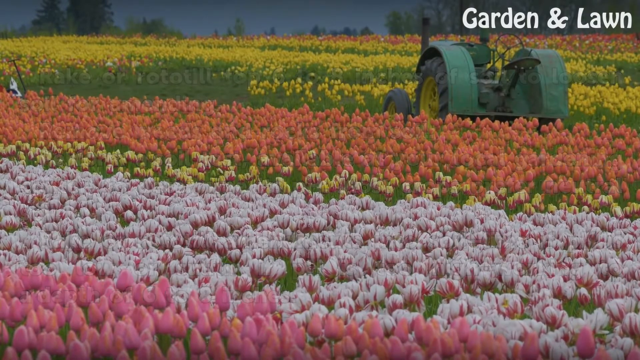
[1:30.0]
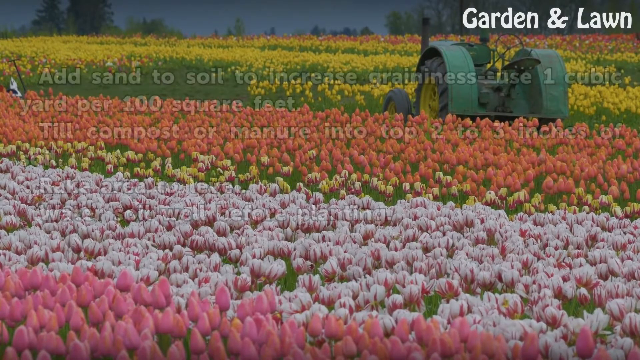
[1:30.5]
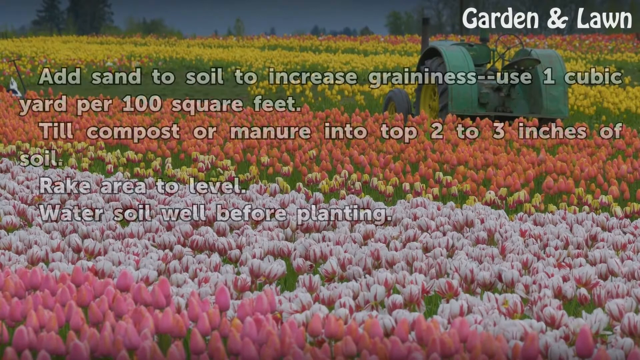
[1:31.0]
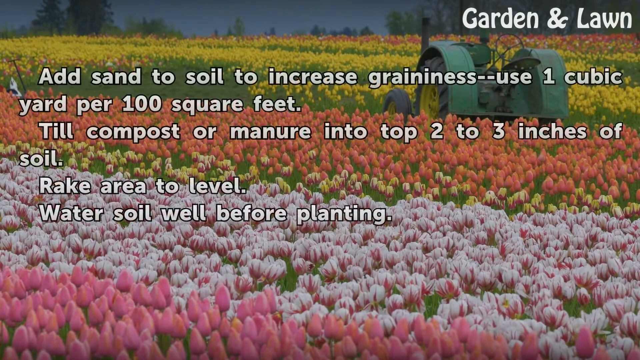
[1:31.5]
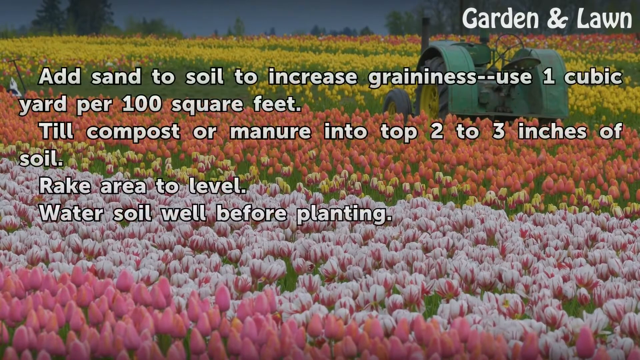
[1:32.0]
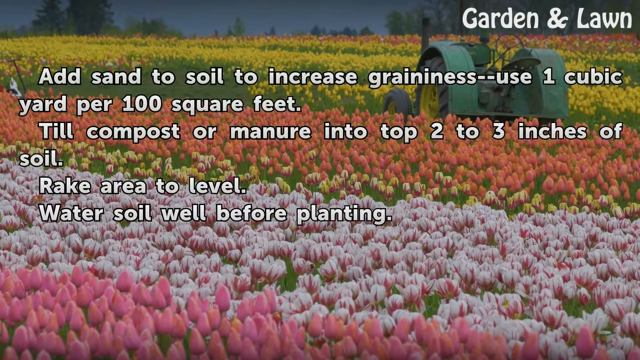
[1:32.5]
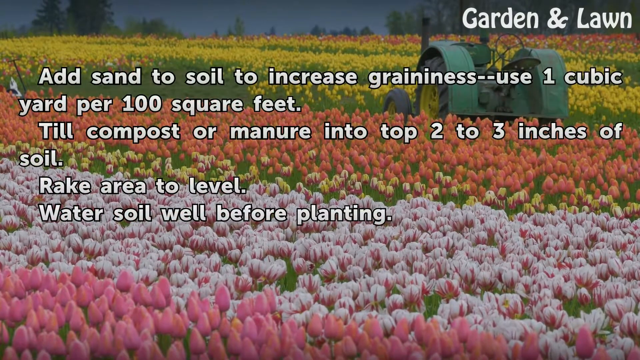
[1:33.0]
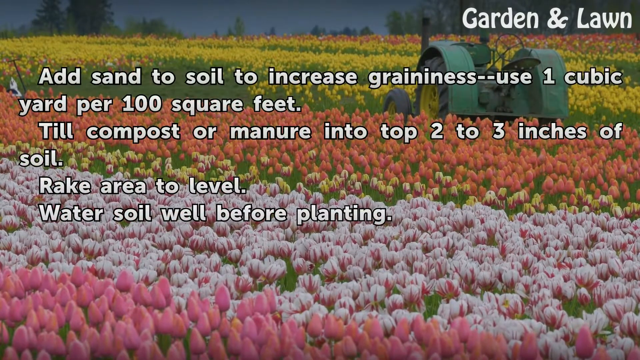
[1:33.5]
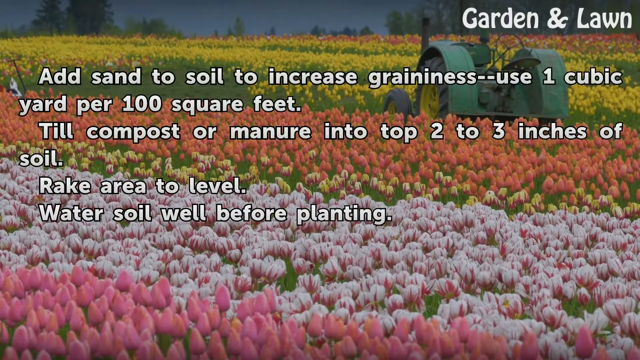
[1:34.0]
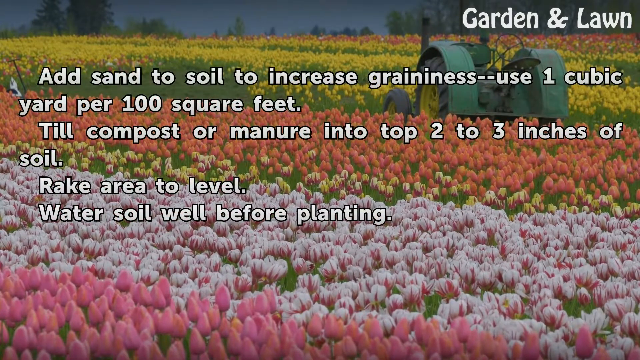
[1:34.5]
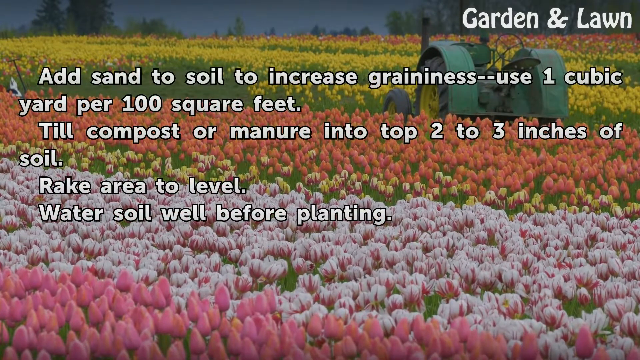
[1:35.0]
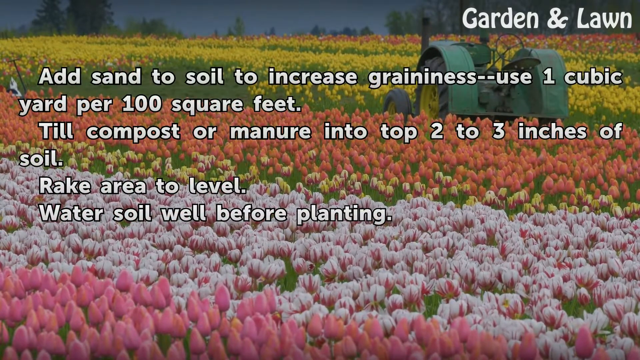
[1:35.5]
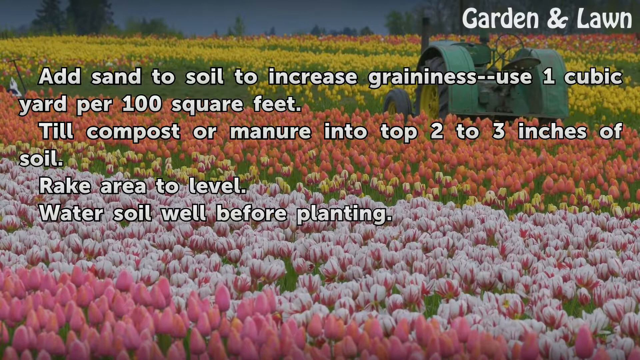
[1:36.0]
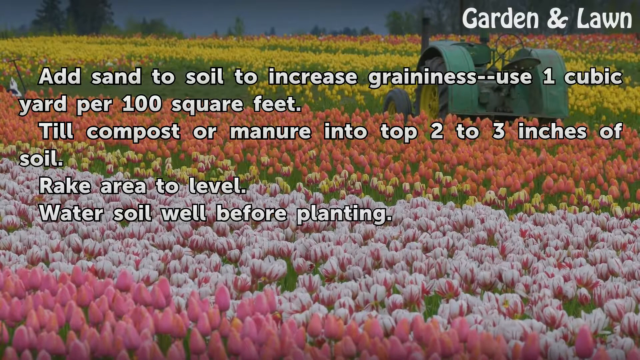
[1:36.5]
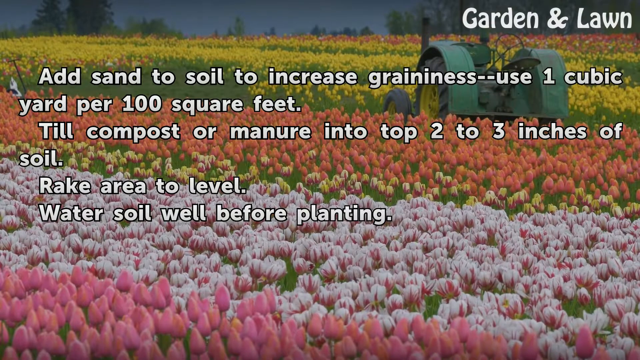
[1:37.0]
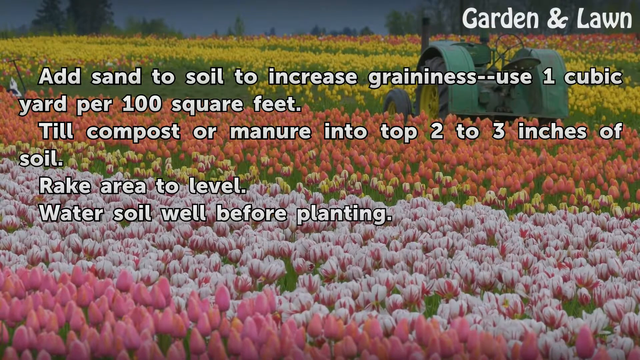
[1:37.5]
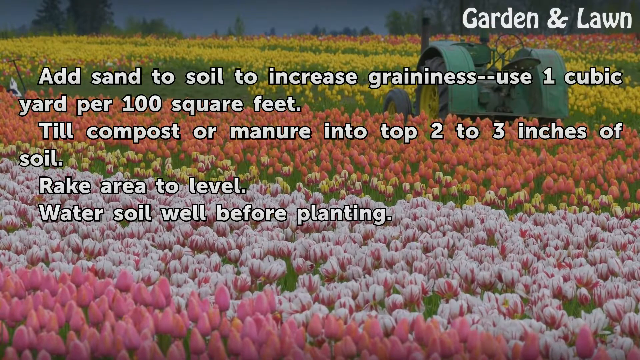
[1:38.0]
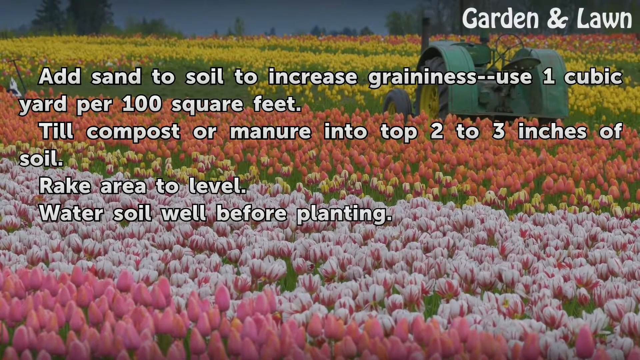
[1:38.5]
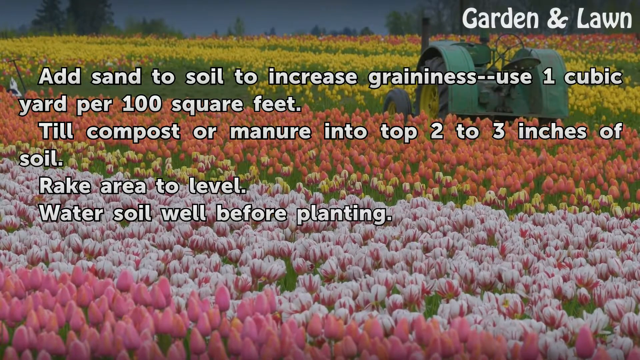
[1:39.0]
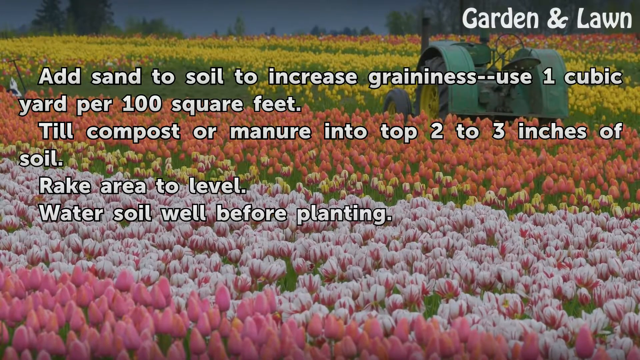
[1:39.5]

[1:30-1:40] The expanse of the field continues, with contrasting colours of flowers. Right at the front, in the foreground, there appears to be a set of pink tulips; the colours go from very pink, to a lighter white and pink, to a rose colour, then to yellow. More text gently fades into view: "add sand to soil to increase graininess, use one cubic yard per 100 square feet, till compost or manure into top two to three inches of soil, rake area to level, water soil well before planting".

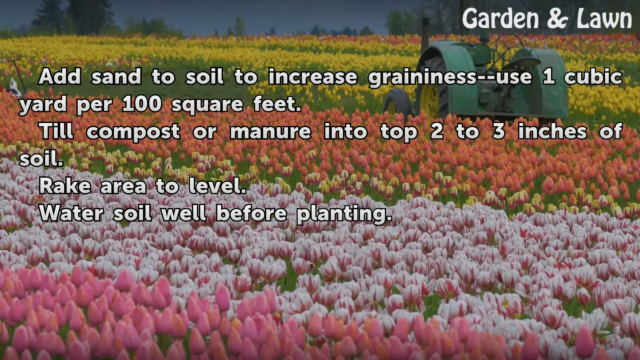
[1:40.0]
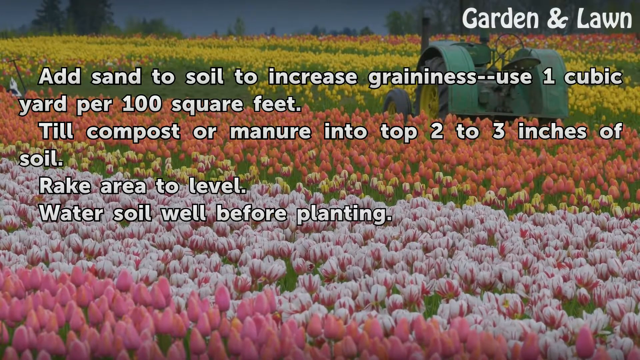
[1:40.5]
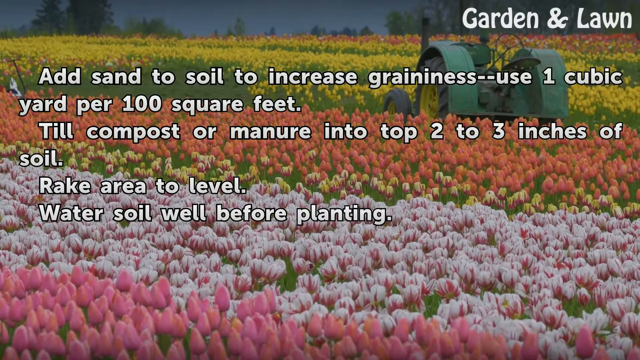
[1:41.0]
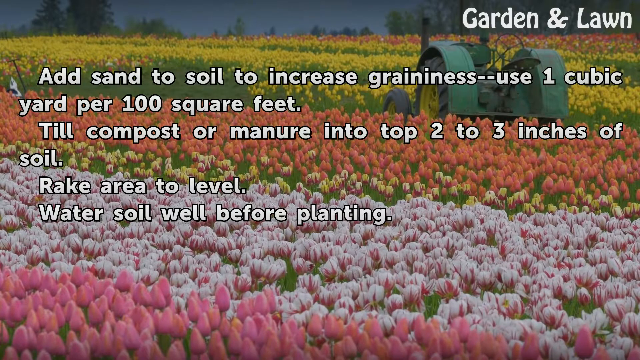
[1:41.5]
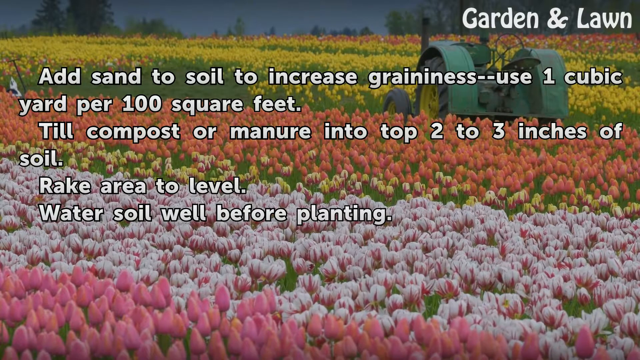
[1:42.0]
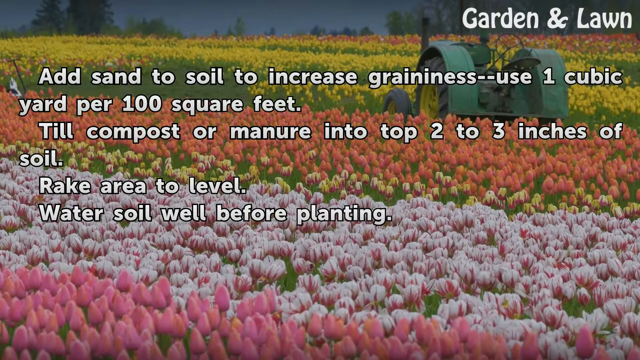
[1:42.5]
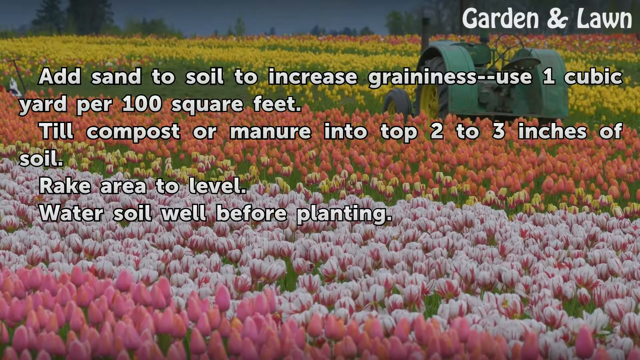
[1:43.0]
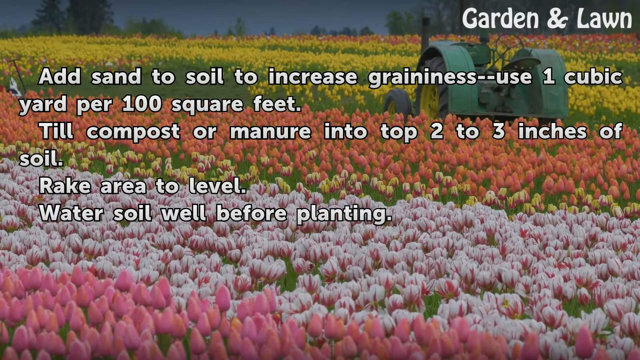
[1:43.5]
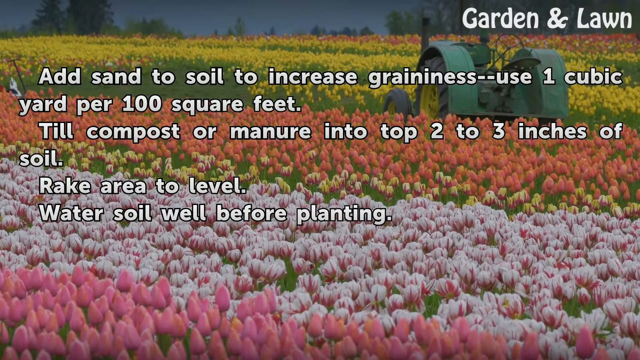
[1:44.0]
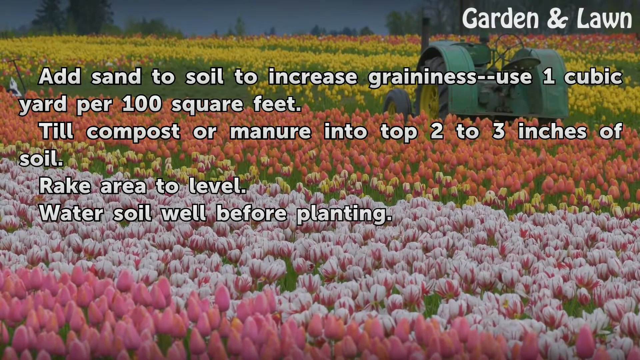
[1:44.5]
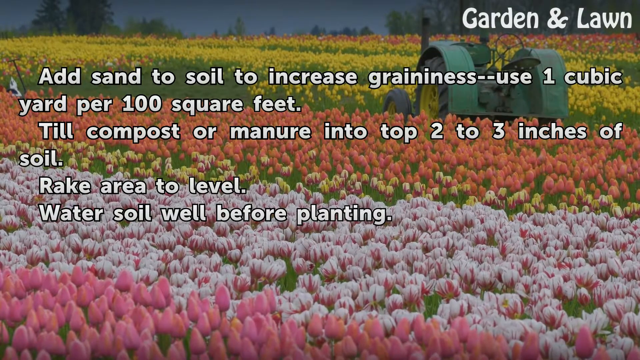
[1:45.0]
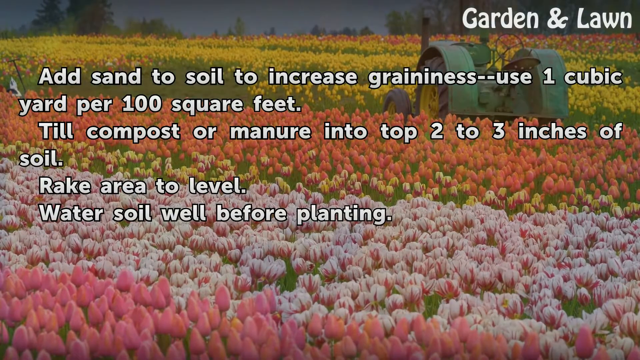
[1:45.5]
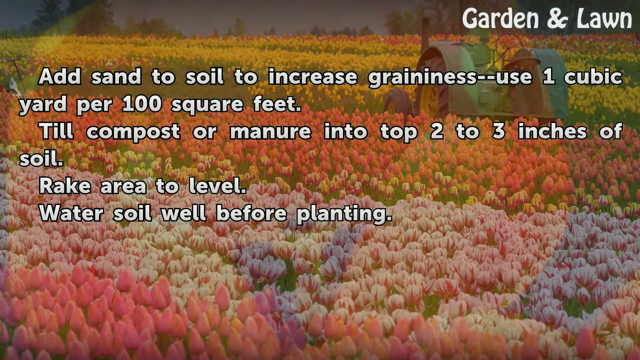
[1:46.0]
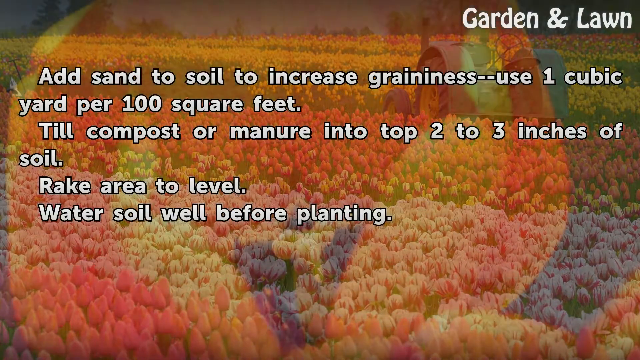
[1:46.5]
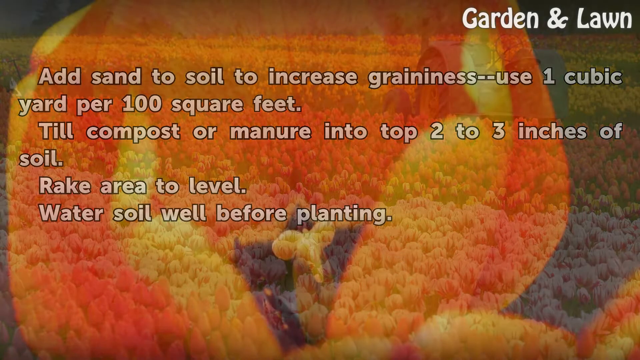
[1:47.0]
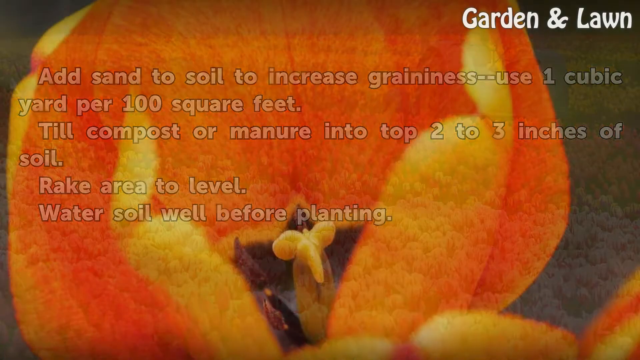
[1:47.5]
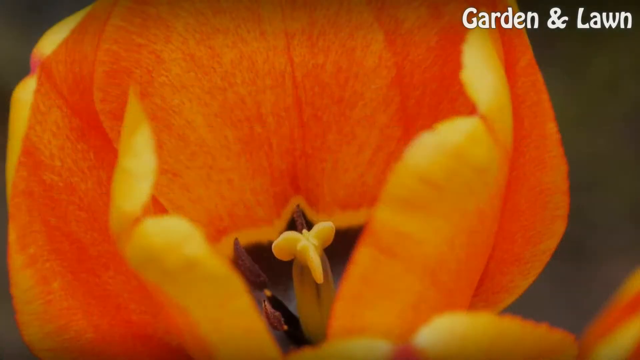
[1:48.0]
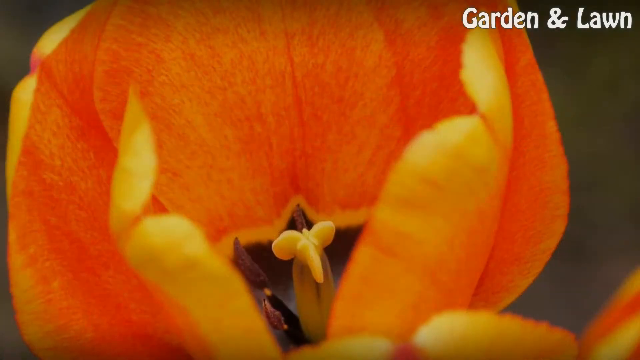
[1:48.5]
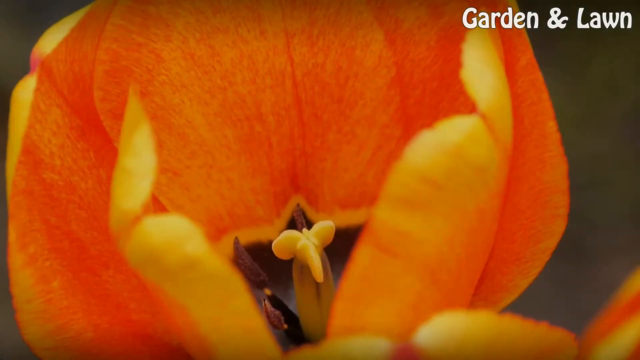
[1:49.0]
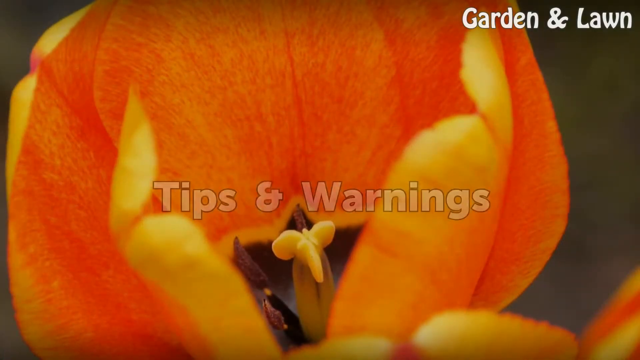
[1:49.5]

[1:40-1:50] The expansive field of flowers remains in the background with the tractor doing some work in the field, and the instructions about adding sand to the soil to increase graininess are laid out on screen. The background photograph then changes to an extreme close-up of a peach-coloured flower. In its middle is something almost like a tiny propeller, and around it are four to six strong-looking petals that form a cup around the centre. The subtitle "tips and warnings" fades into view.